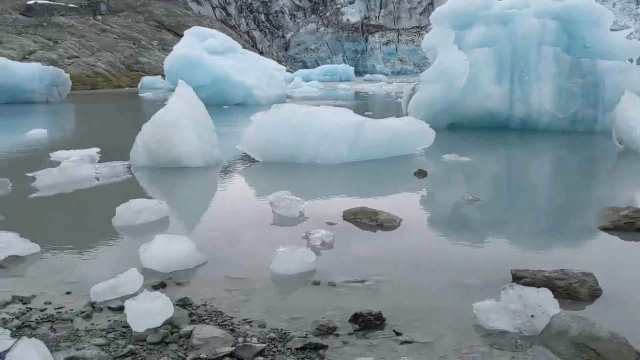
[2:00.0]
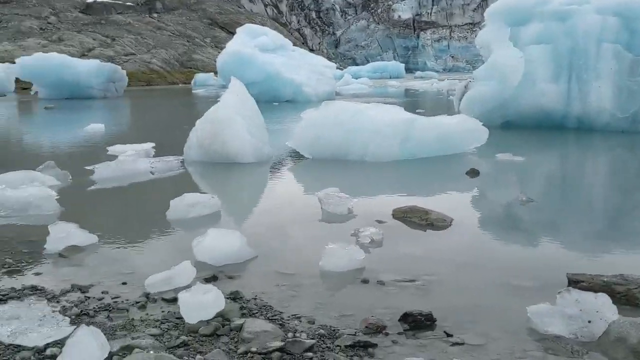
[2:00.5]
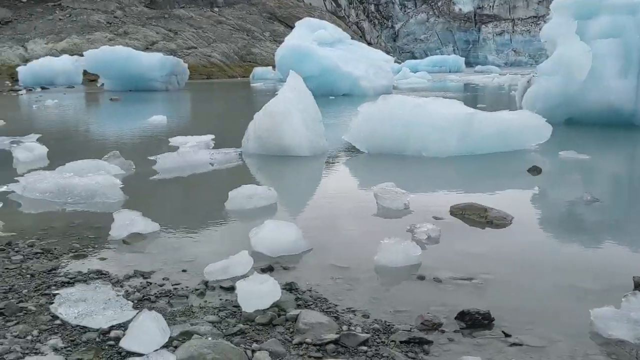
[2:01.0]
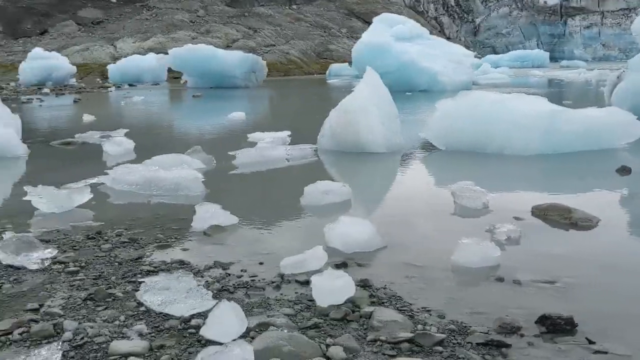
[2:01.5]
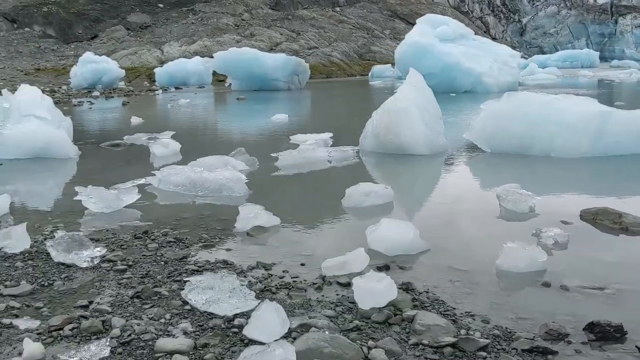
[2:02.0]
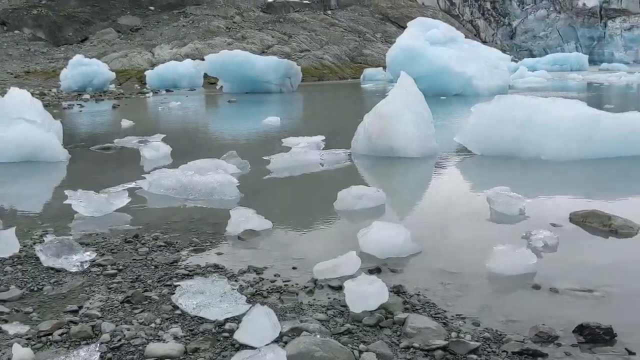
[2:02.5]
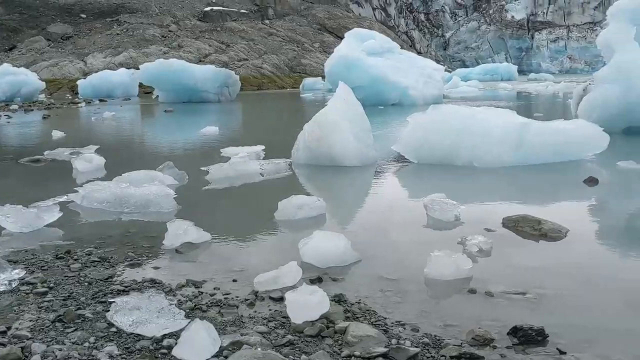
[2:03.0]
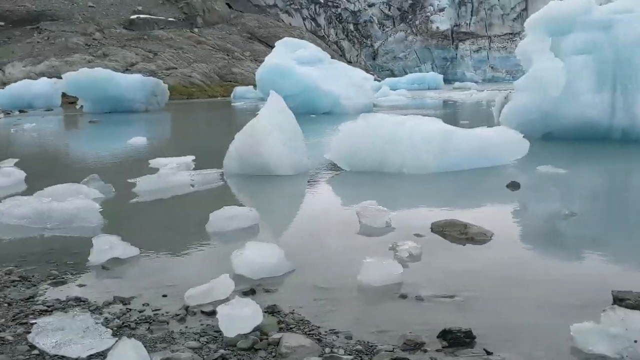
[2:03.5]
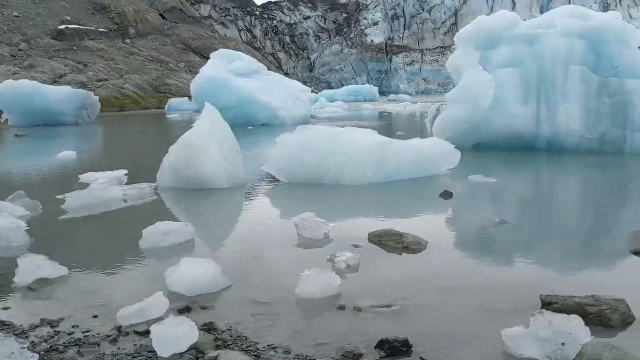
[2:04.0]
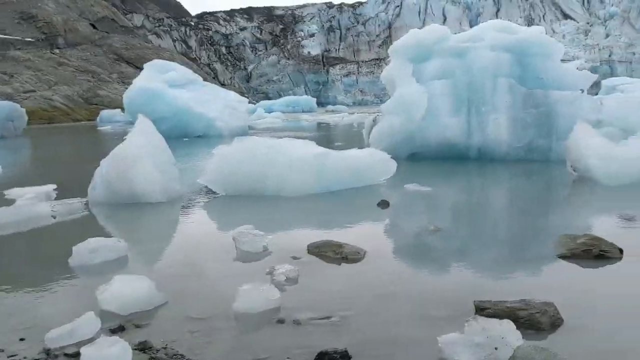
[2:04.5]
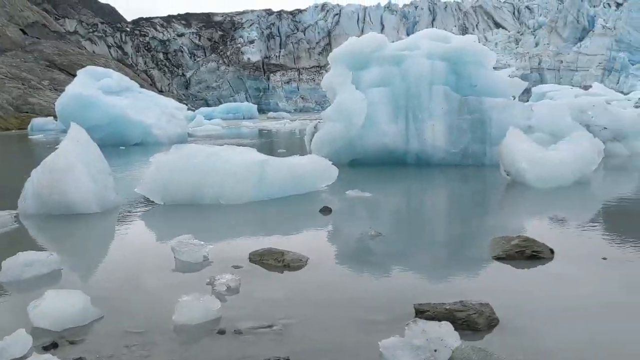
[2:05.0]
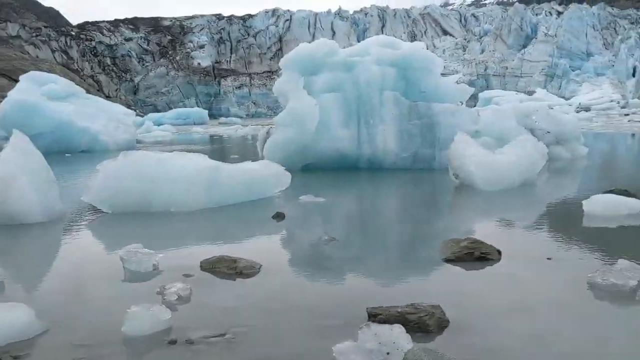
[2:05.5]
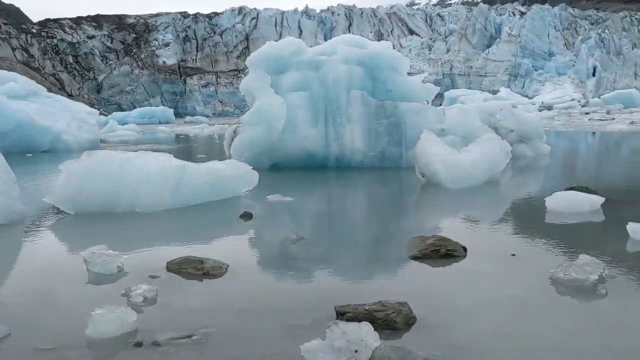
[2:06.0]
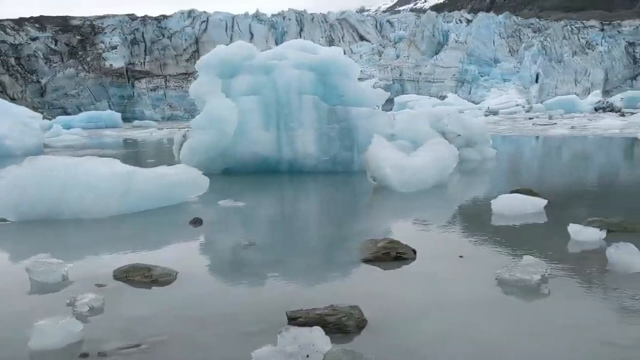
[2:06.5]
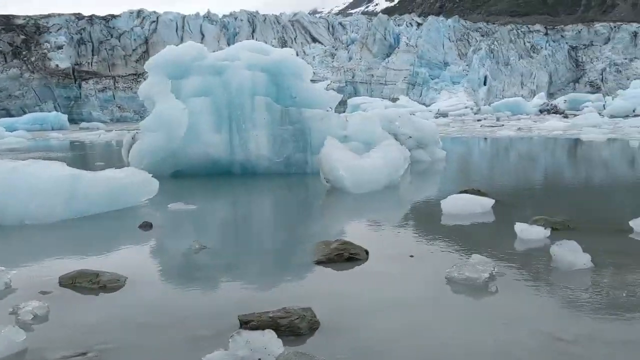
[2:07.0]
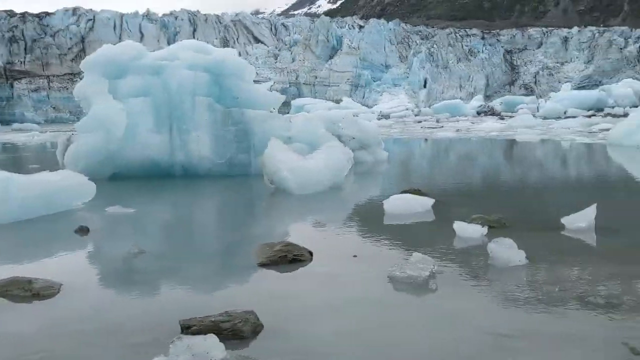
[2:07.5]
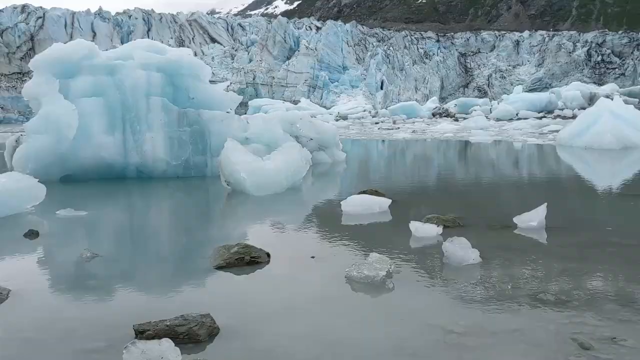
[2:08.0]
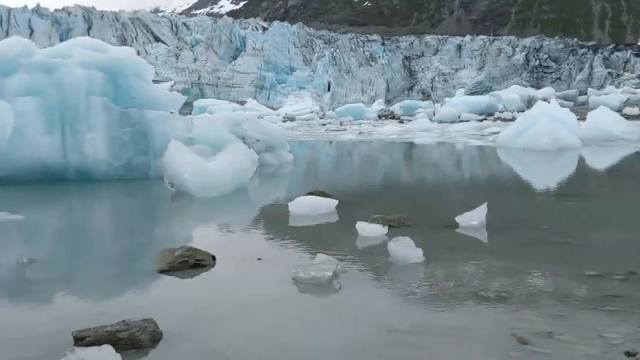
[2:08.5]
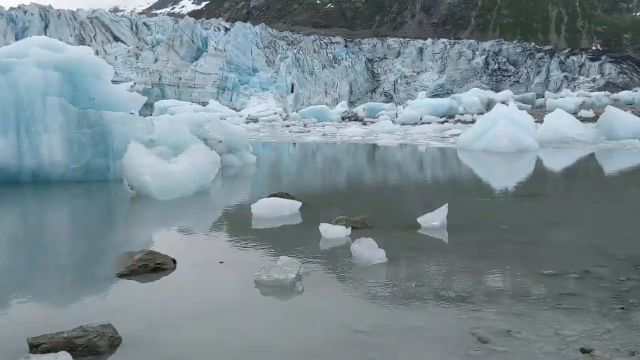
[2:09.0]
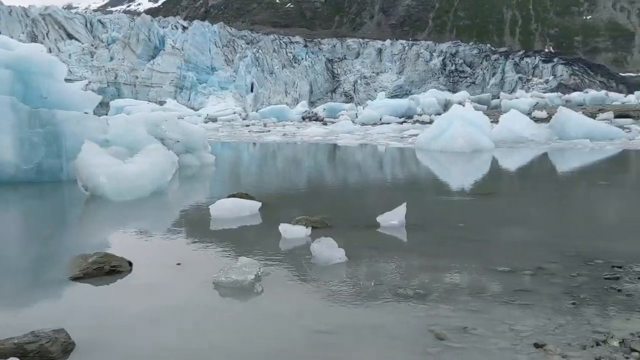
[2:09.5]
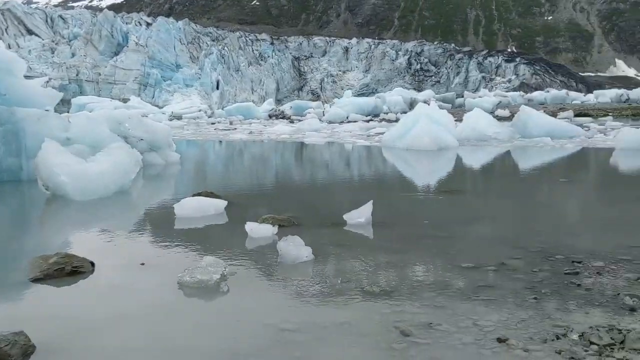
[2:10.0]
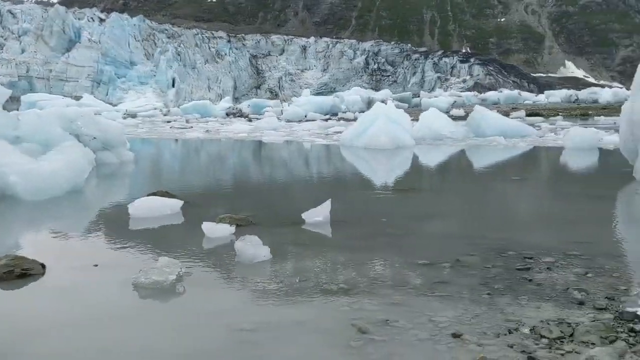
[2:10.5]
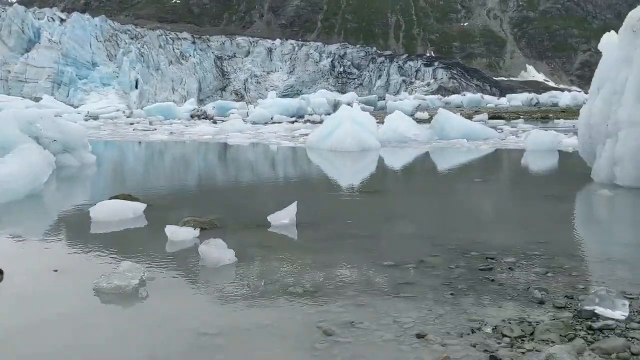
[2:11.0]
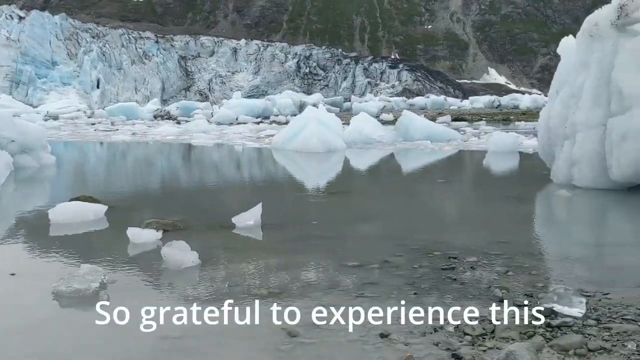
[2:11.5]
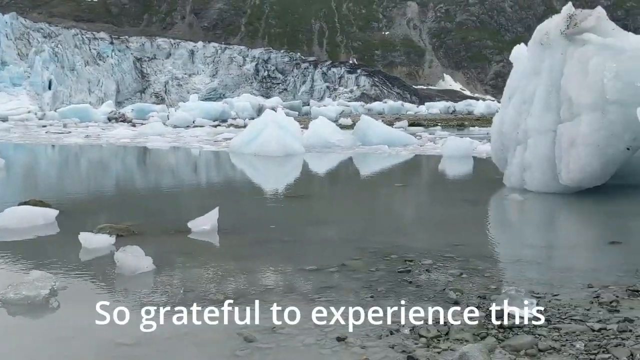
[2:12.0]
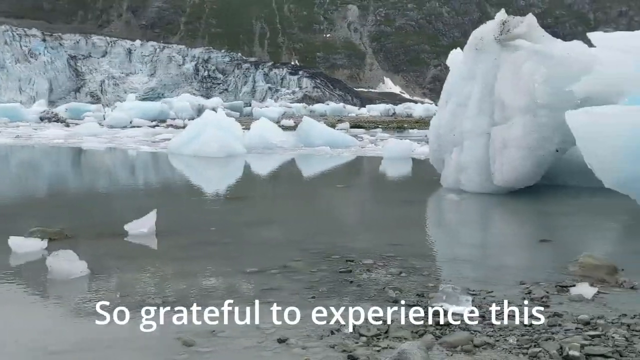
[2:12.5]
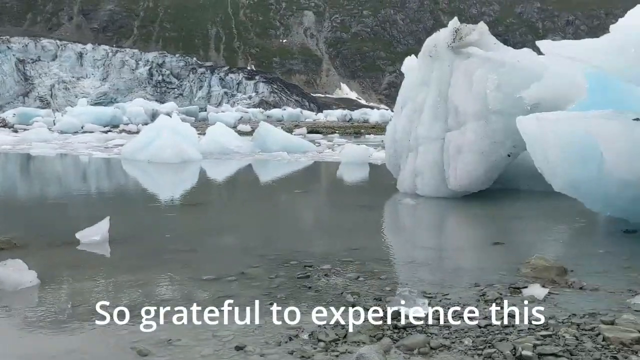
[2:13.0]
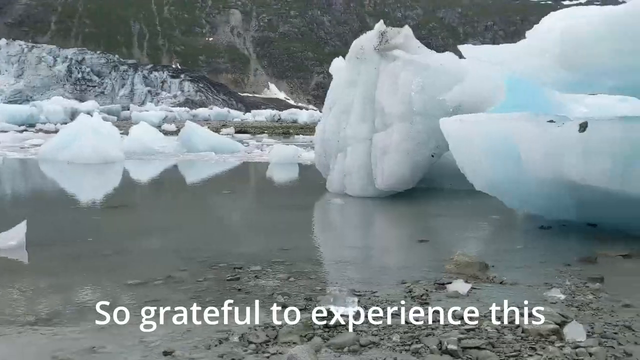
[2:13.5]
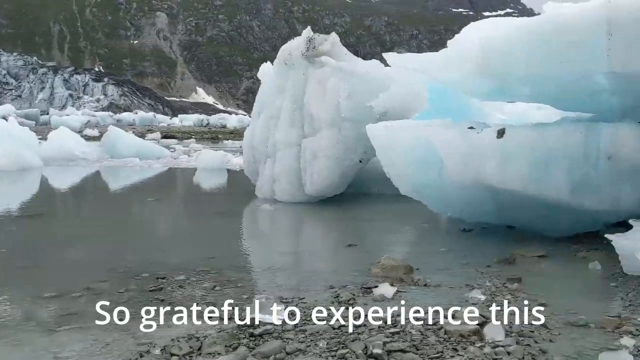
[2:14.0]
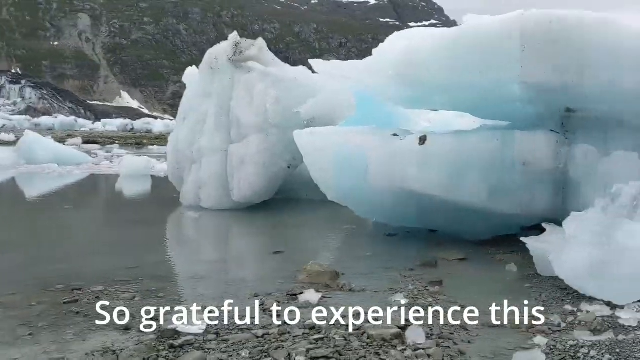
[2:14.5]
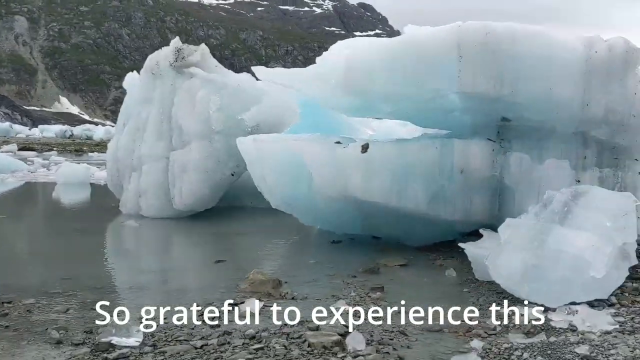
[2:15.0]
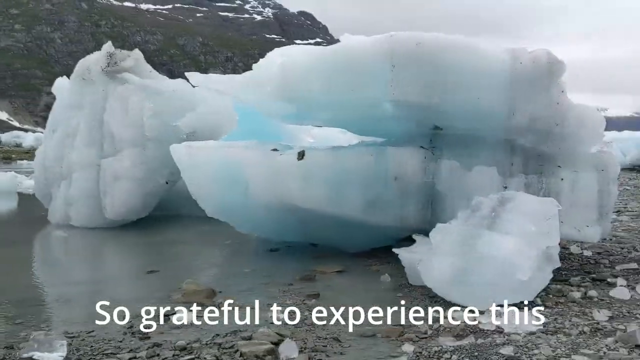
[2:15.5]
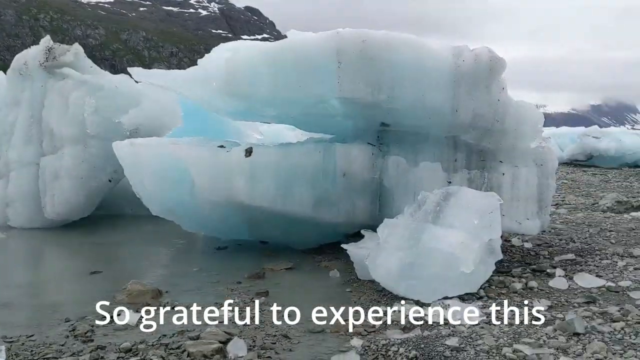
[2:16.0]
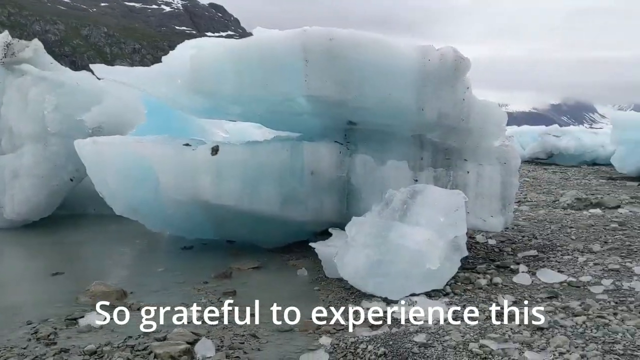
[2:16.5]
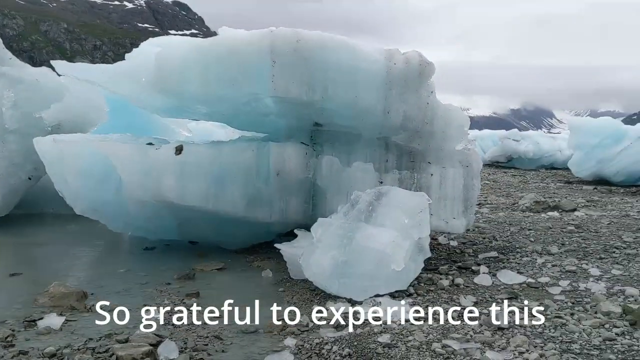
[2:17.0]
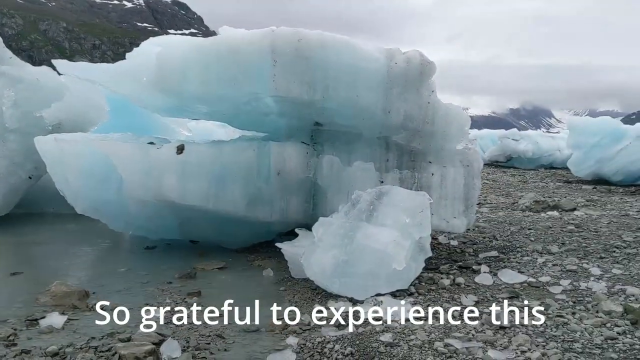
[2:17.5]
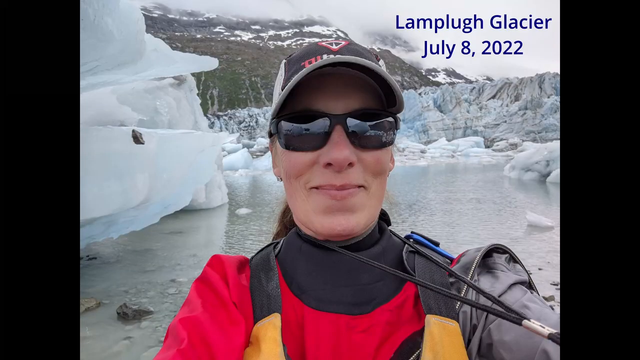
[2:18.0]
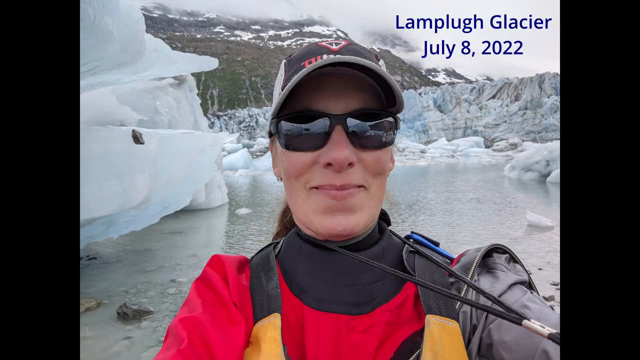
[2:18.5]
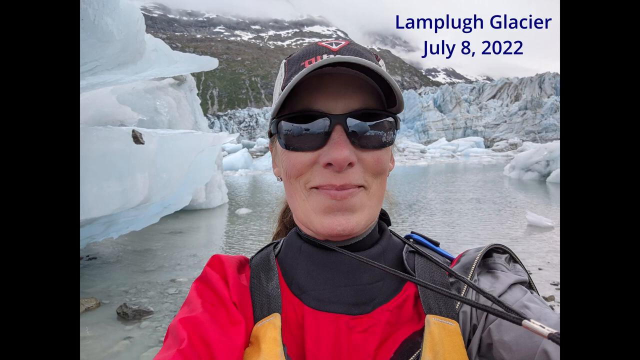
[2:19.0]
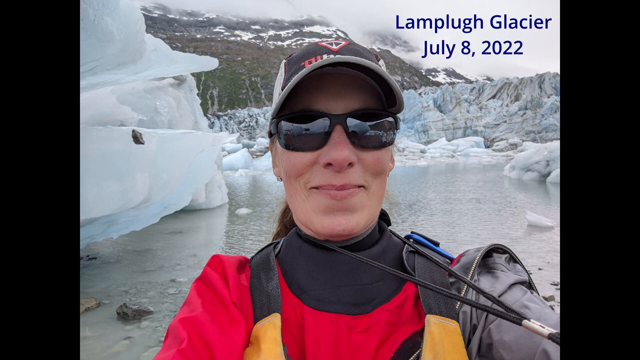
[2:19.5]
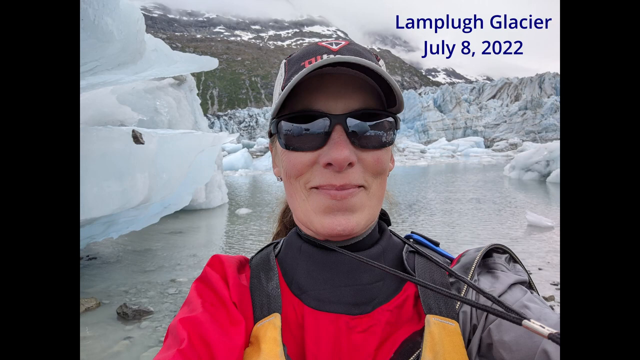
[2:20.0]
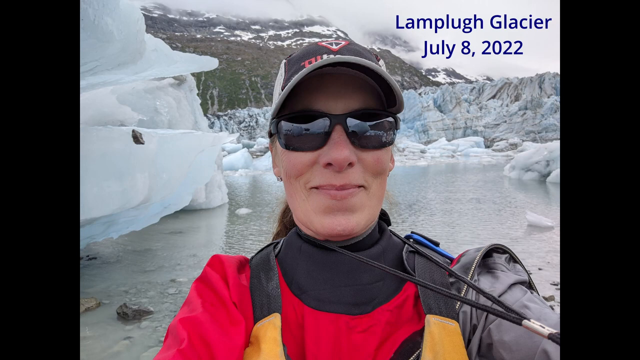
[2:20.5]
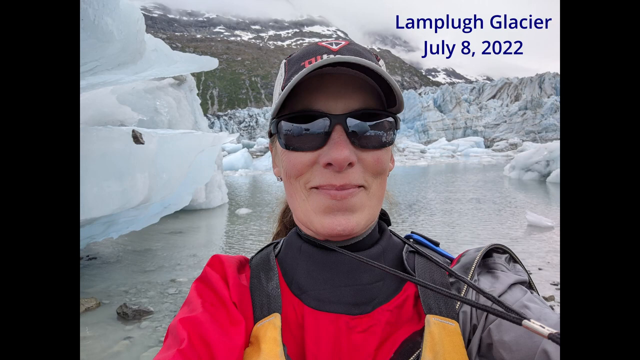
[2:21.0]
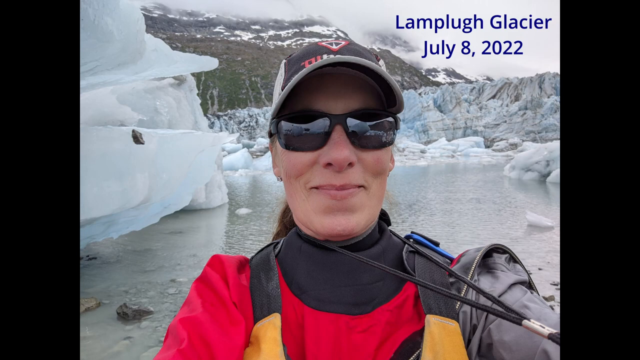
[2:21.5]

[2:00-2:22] The camera pans somewhat unsteadily left and right across the meltwater pool at the end of the glacier, with the tall cliff of dirty ice forming the front of the glacier in the background. Finally it shows a woman, presumably the person filming, wearing a red padded jacket, sunglasses and a baseball cap, smiling at the camera, with a blue caption in the top right reading "Lamplugh Glacier, July the 8th, 2022".